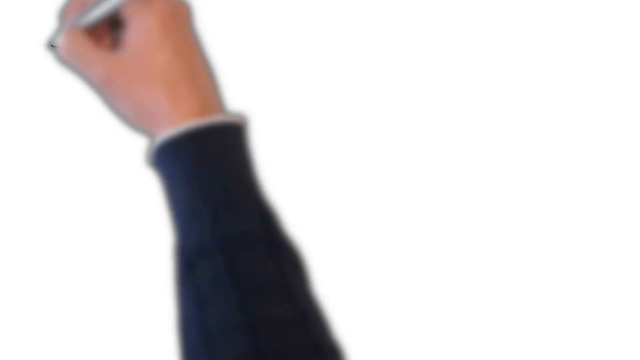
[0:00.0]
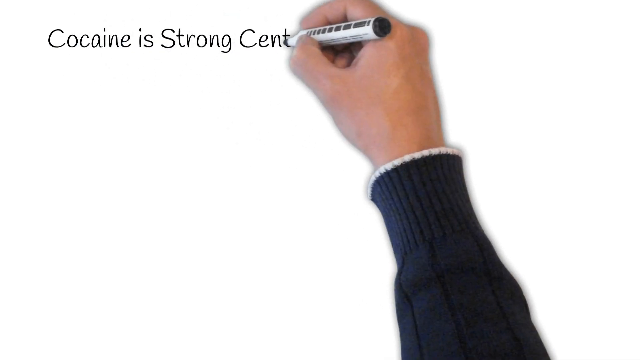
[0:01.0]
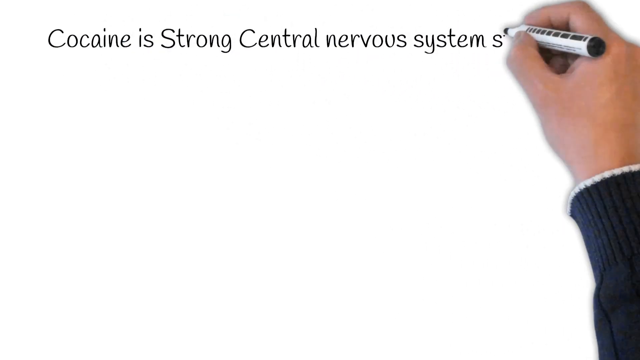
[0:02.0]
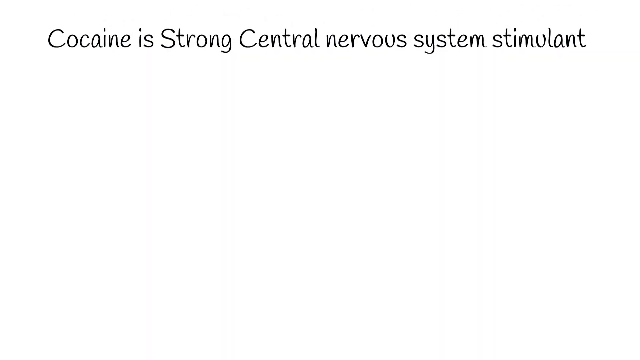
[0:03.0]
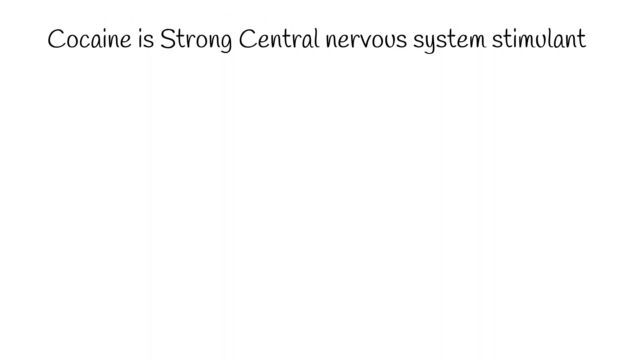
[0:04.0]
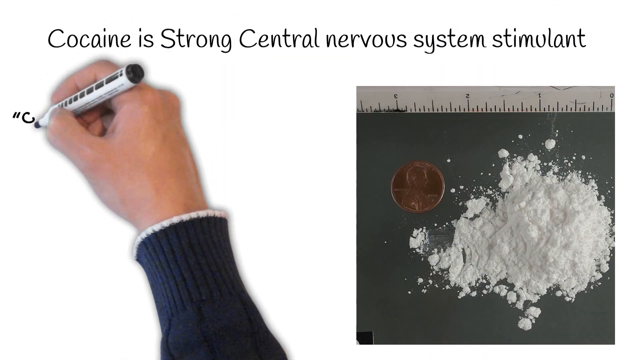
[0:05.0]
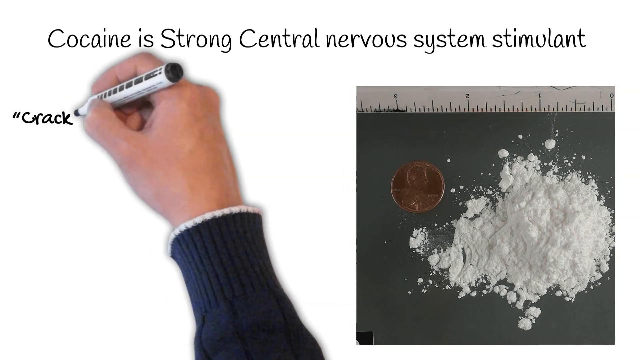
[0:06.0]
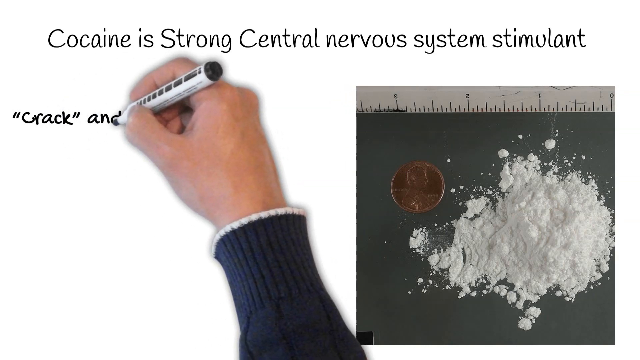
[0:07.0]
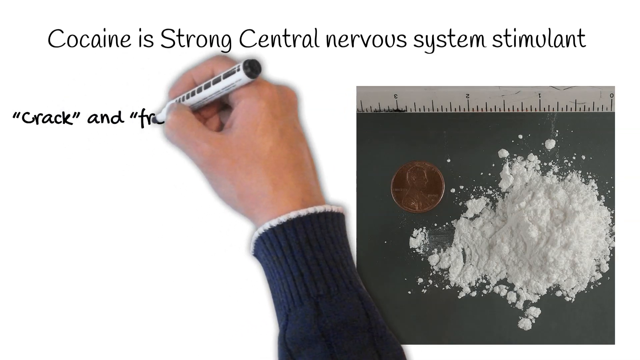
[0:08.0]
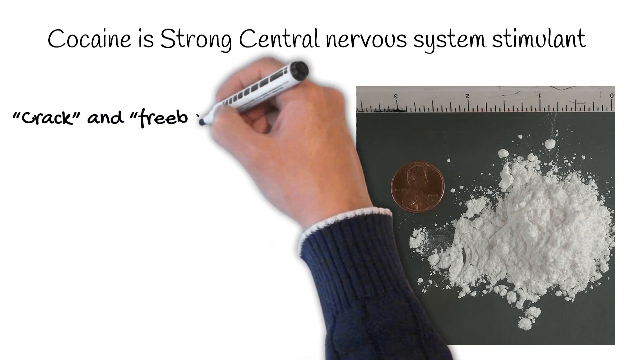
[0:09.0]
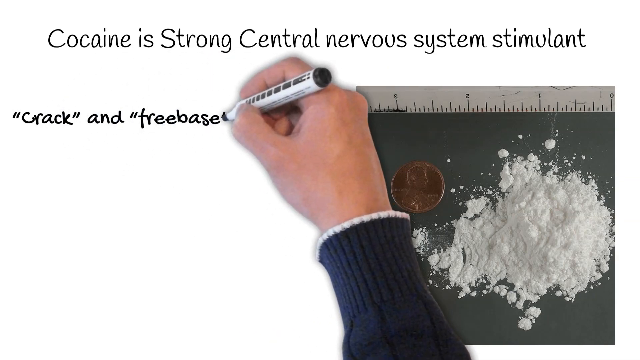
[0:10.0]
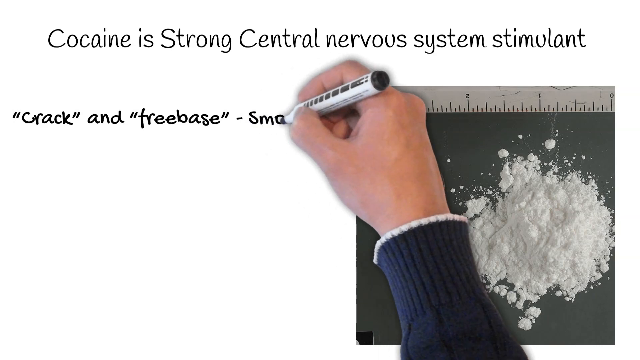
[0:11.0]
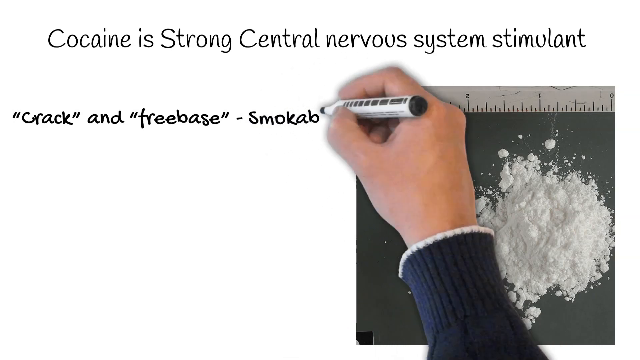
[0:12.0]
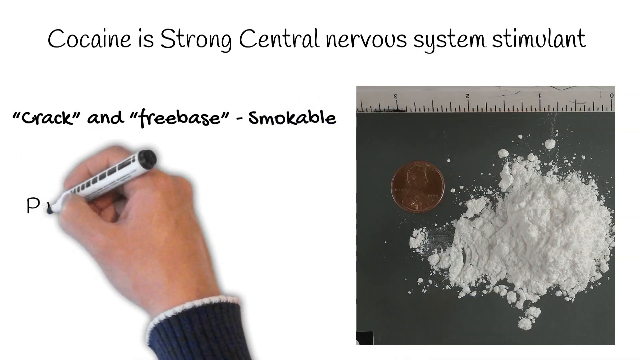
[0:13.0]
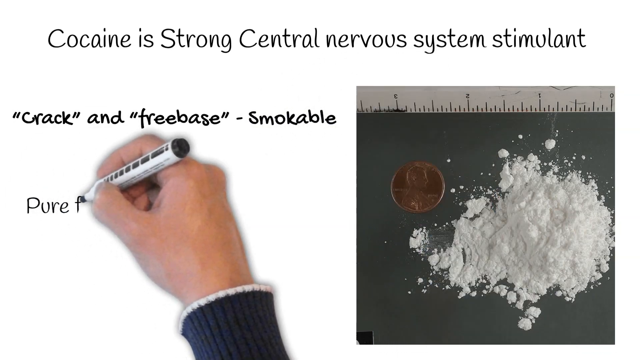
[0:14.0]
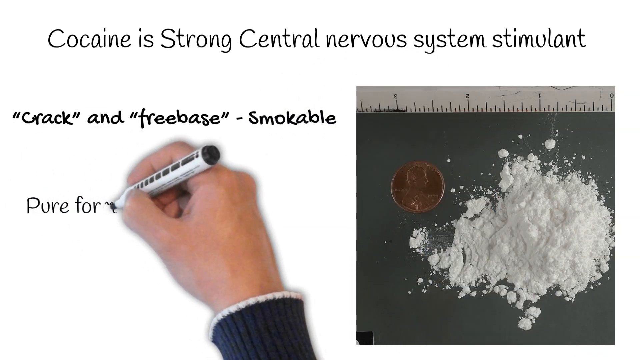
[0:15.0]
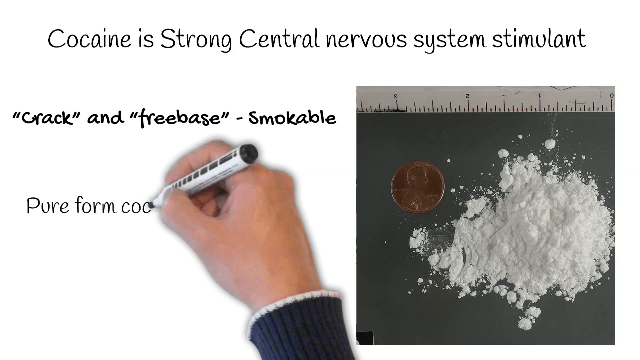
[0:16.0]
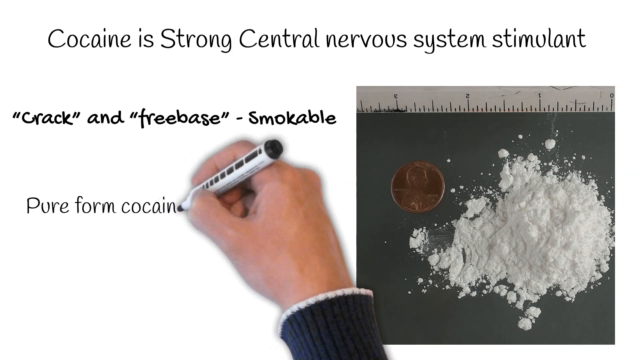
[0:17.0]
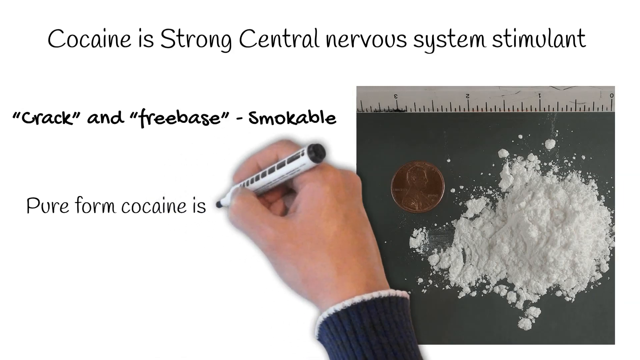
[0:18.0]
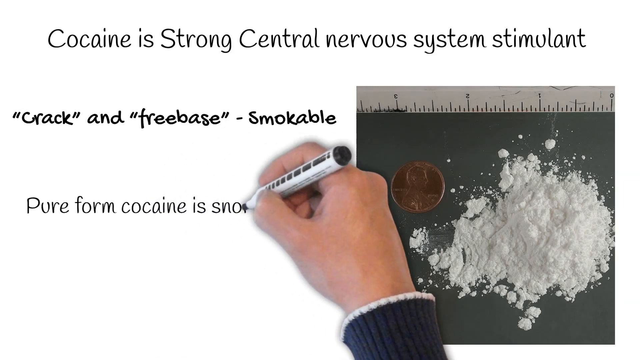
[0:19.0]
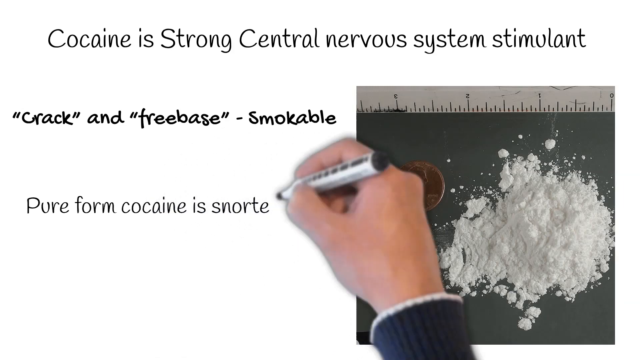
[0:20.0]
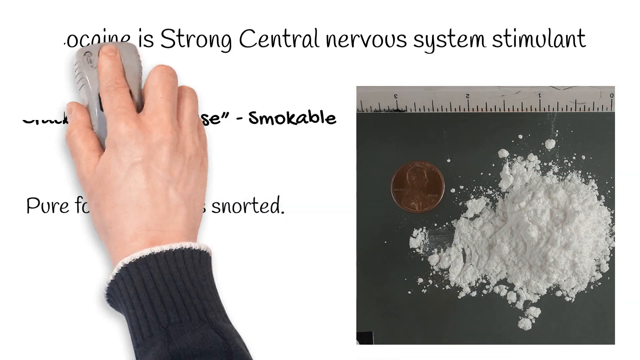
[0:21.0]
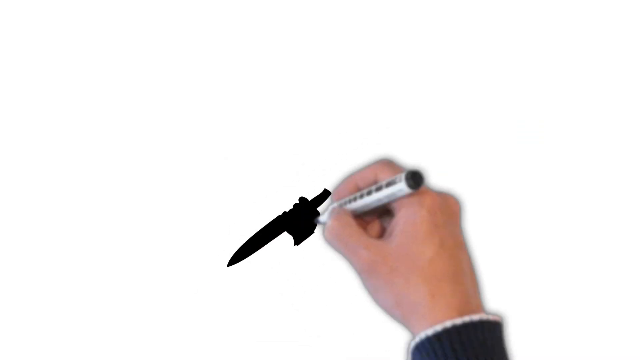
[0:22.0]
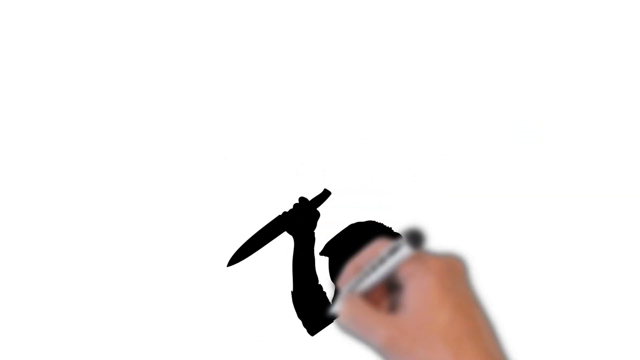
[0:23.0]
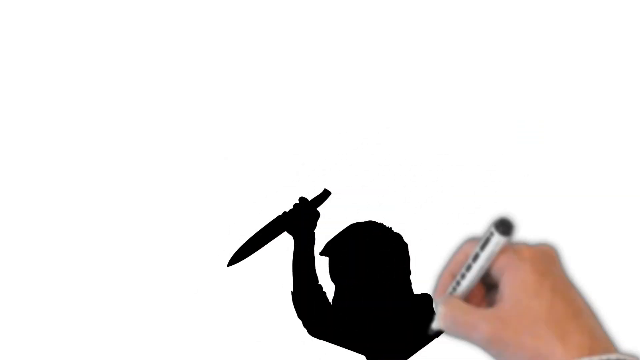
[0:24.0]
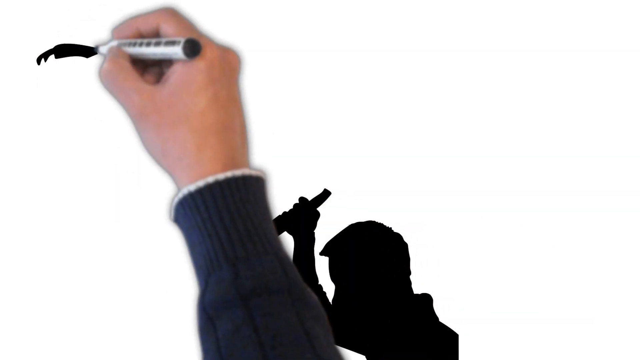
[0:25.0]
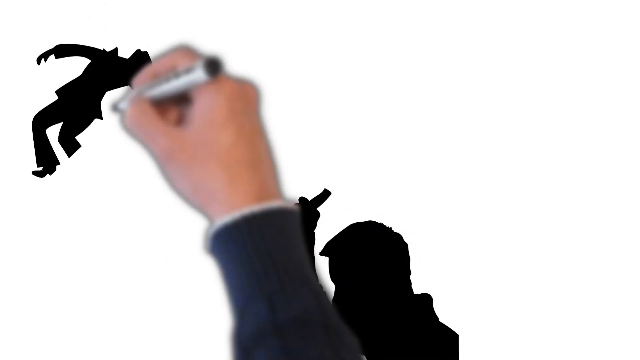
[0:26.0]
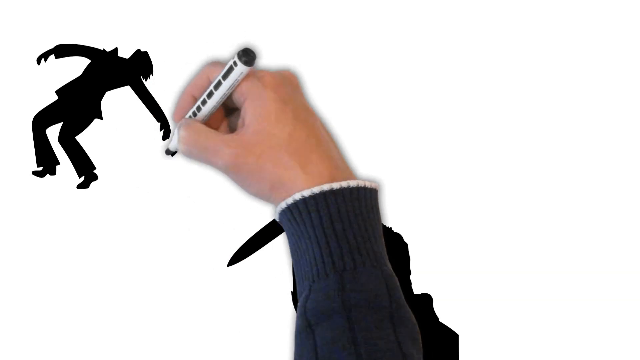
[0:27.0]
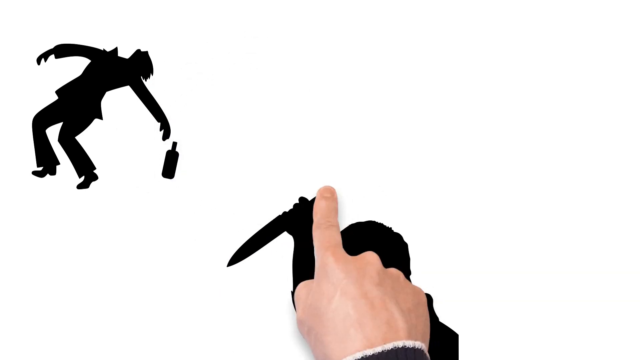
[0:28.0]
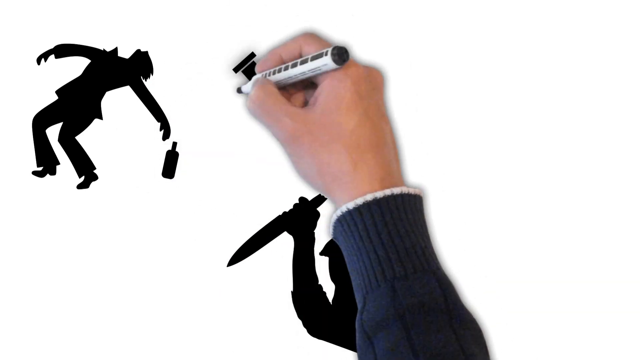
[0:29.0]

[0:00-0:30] An animated hand writes on a board; the animation is part of a software. It is a Caucasian right hand in a black sweater with white trim around the end, holding a mostly white marker with black lettering on it. The words written across the screen say "cocaine is strong central nervous system stimulant." An image then appears on the right side showing cocaine on a dark table, with a penny beside it on the left to show the size difference and a measuring tape at the top marked from zero to one inch, two inches and three and a half inches. The pen then writes on the left the words "crack" and "freebase" in quotation marks, with text reading "crack and freebase smokable." Below that, in a different font, it says "pure form cocaine is snorted." Everything is then erased, and the pen draws a black-and-white image of someone holding a knife and stabbing down; only their neck, head and right arm holding the knife in a threatening way are visible. In the upper left-hand corner, a person appears whose bottle has fallen out of their left hand as they fall over.